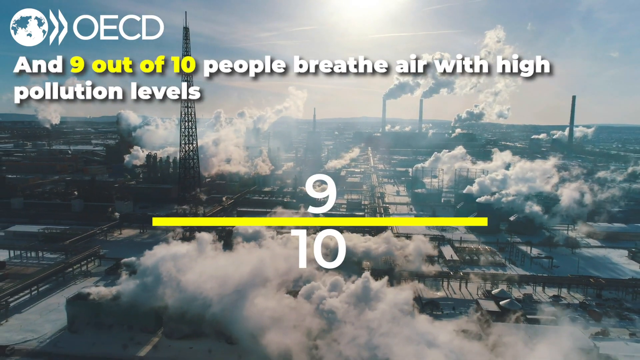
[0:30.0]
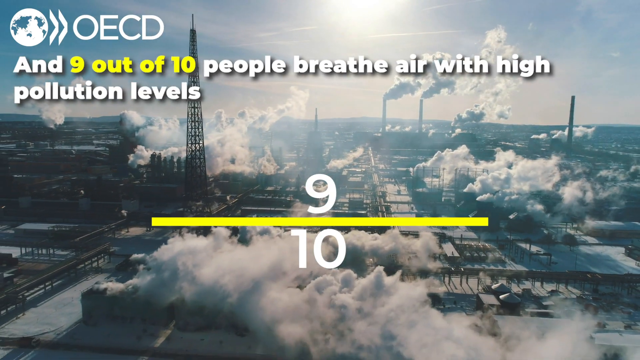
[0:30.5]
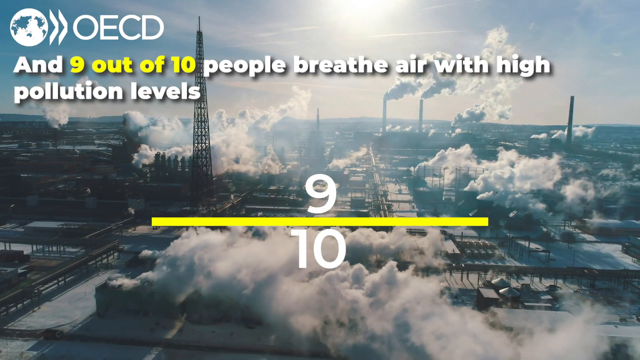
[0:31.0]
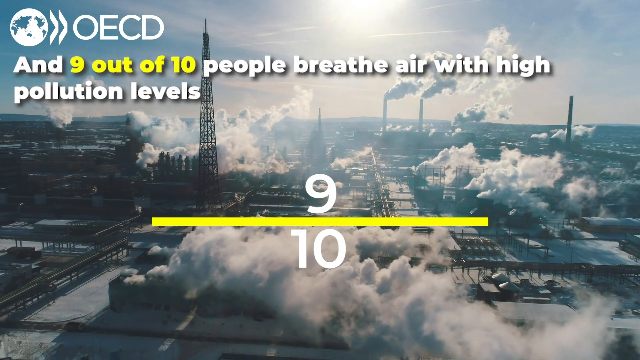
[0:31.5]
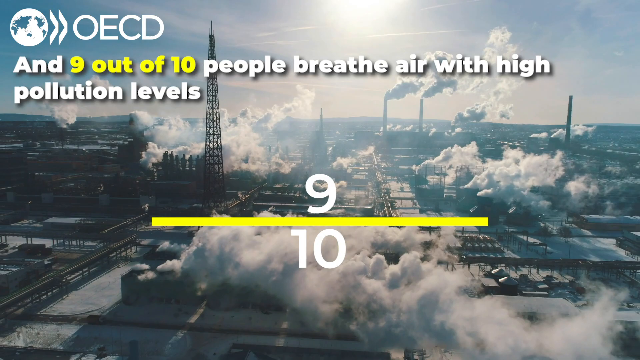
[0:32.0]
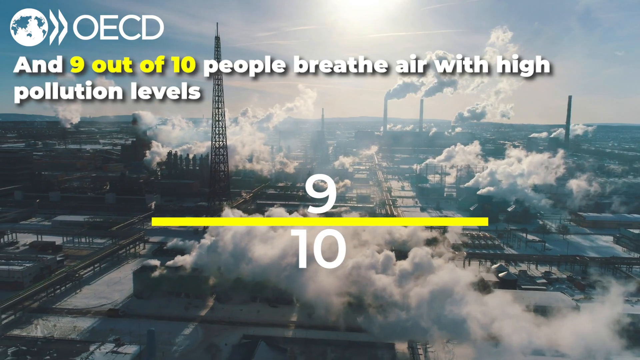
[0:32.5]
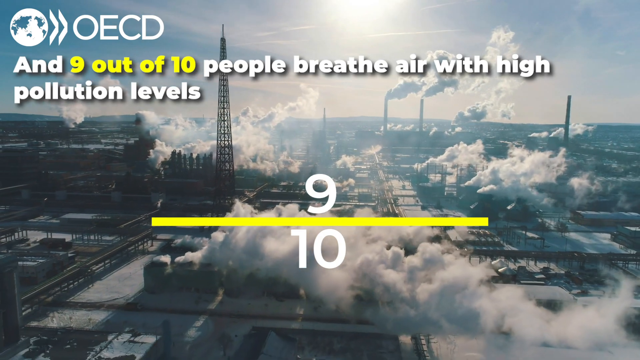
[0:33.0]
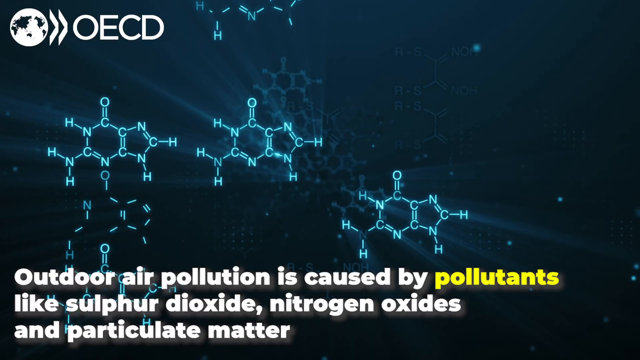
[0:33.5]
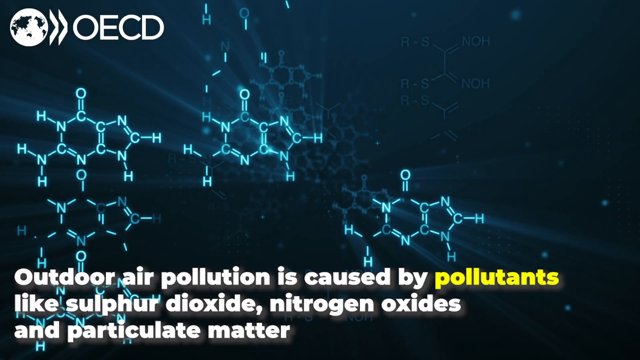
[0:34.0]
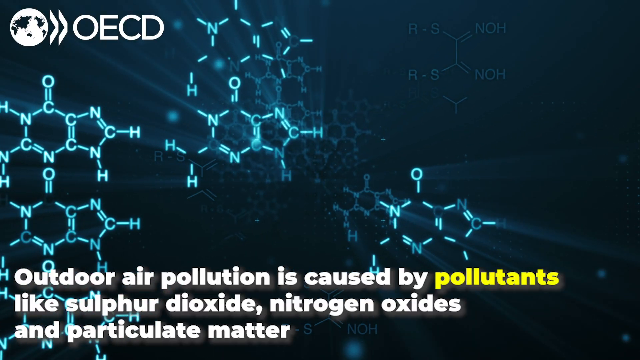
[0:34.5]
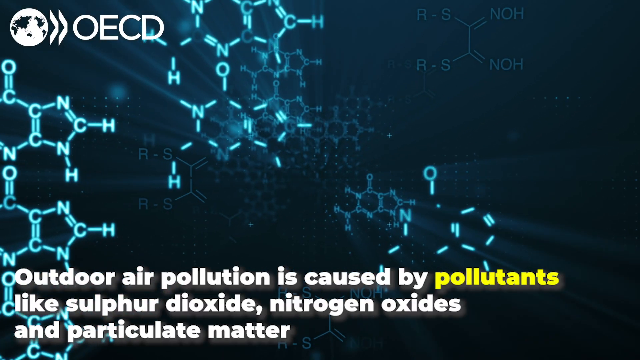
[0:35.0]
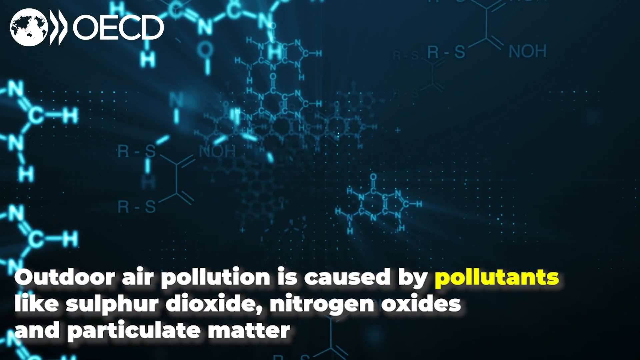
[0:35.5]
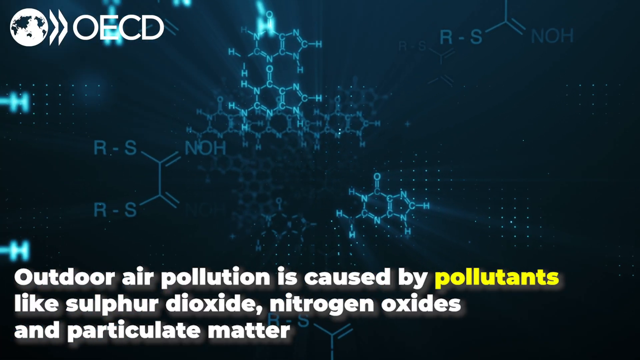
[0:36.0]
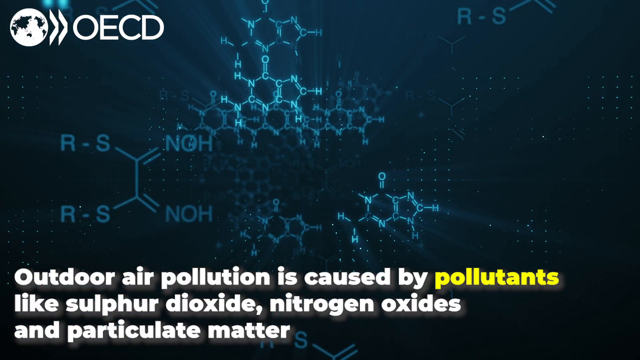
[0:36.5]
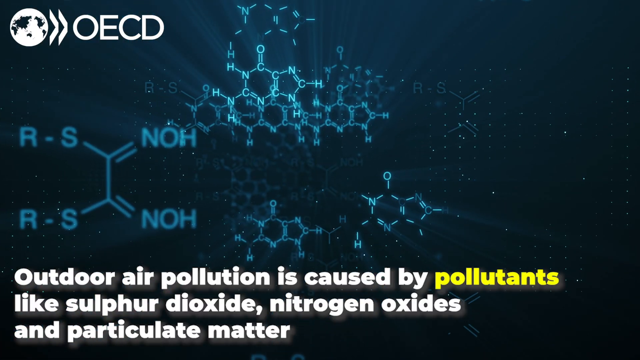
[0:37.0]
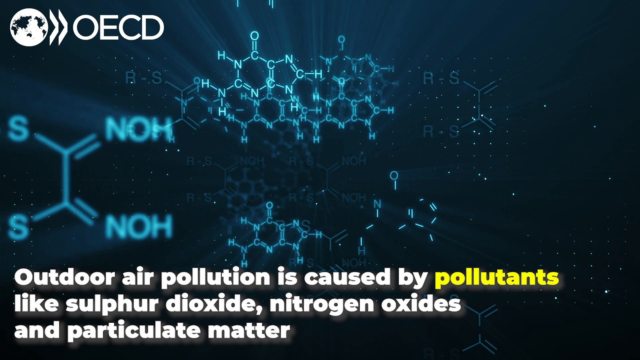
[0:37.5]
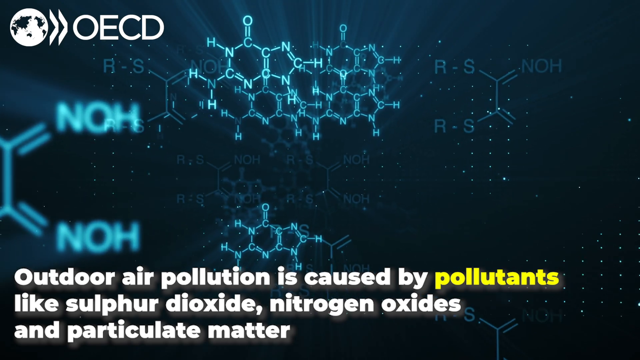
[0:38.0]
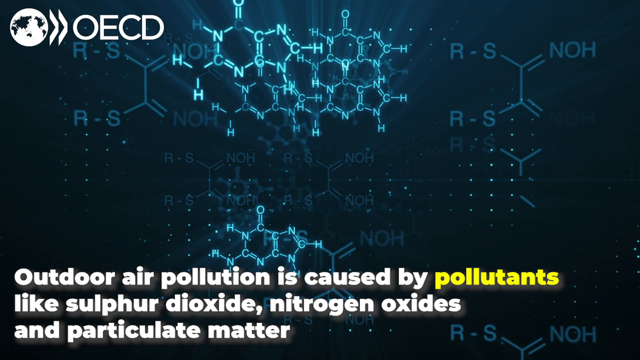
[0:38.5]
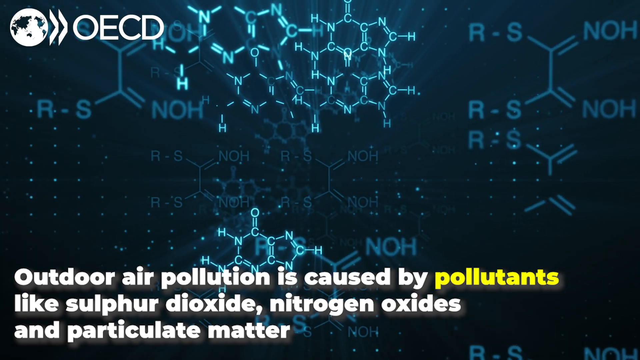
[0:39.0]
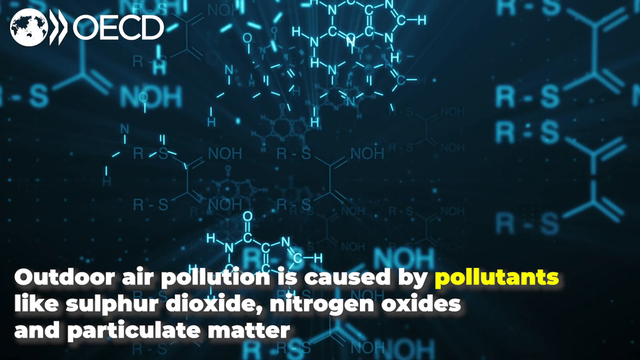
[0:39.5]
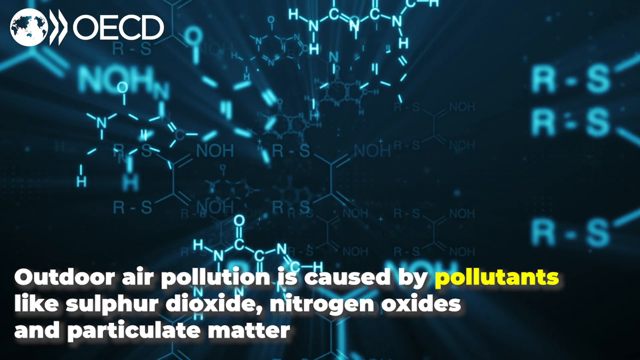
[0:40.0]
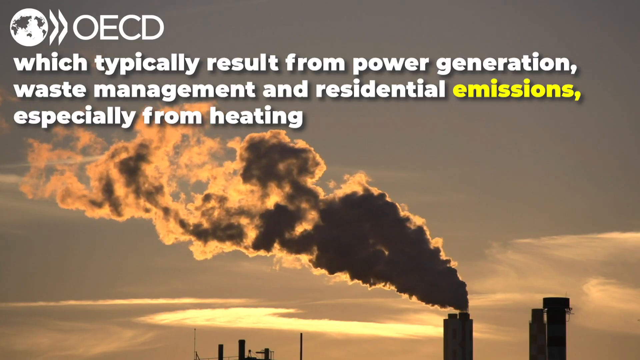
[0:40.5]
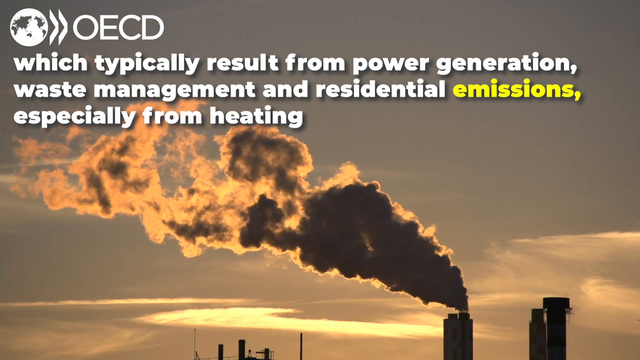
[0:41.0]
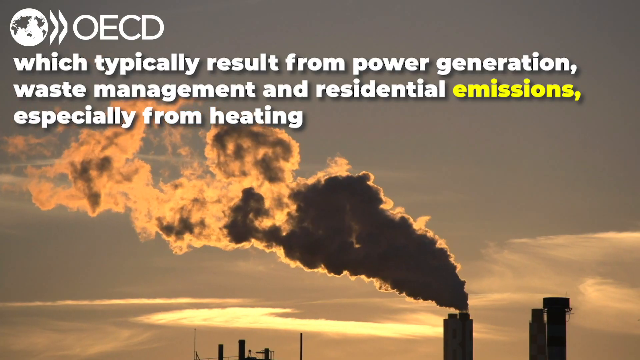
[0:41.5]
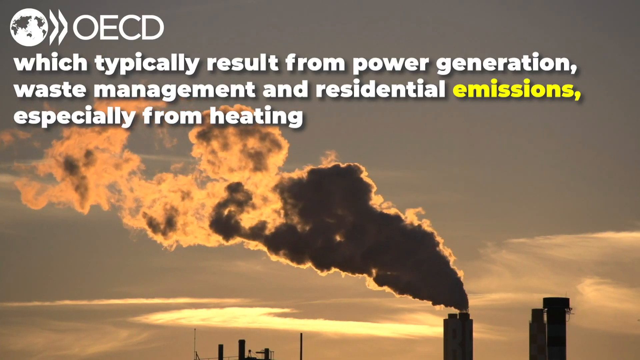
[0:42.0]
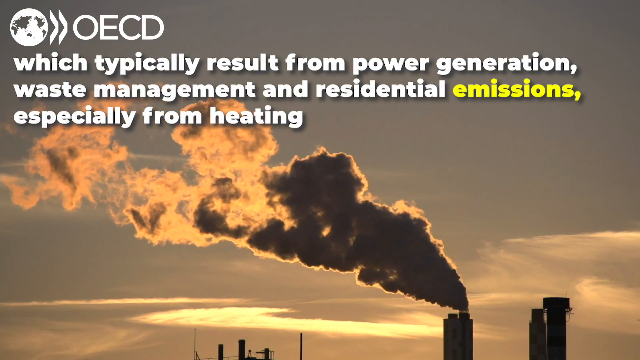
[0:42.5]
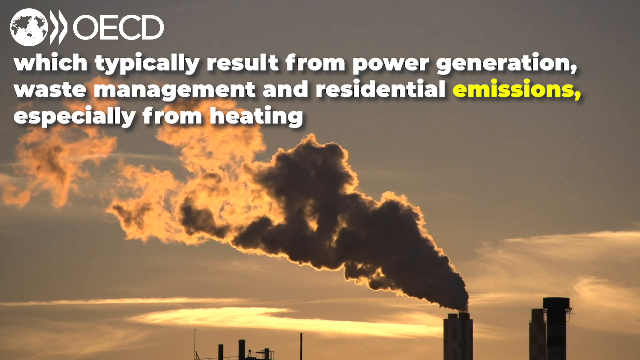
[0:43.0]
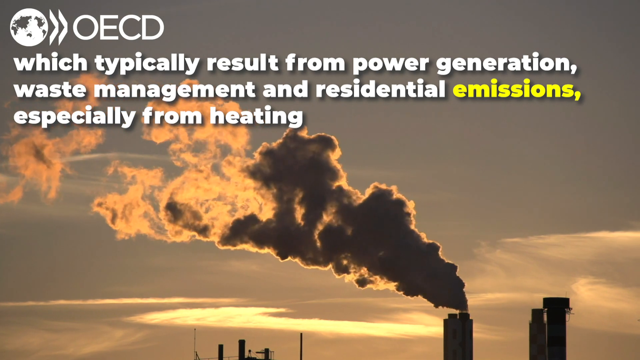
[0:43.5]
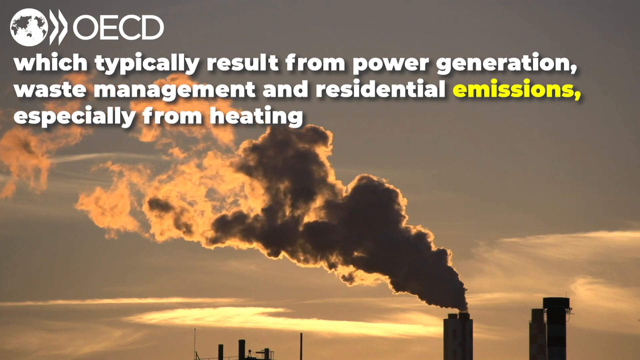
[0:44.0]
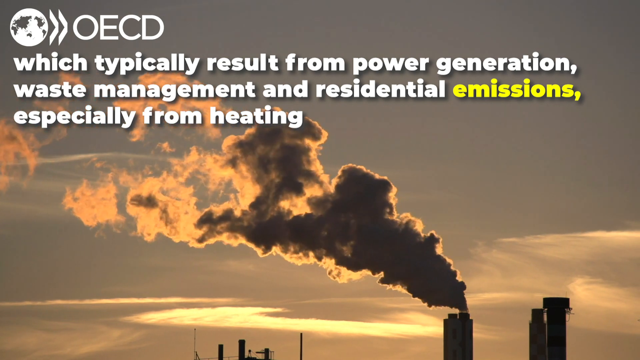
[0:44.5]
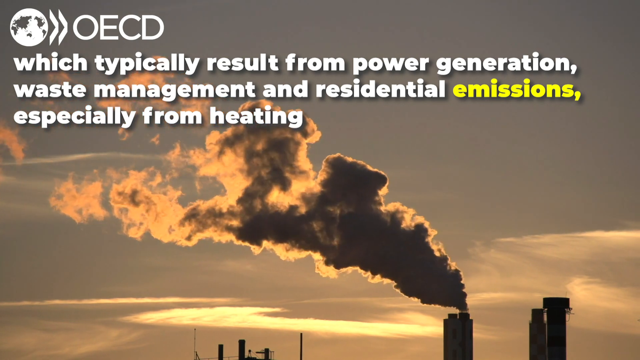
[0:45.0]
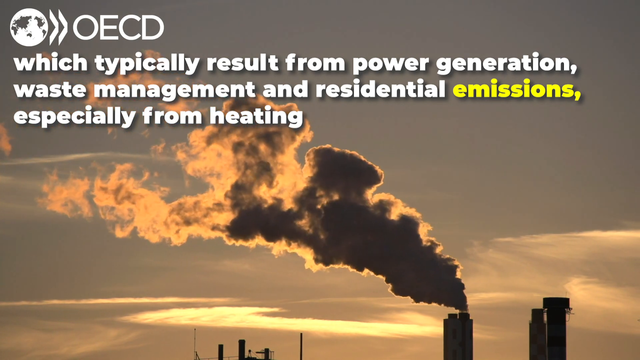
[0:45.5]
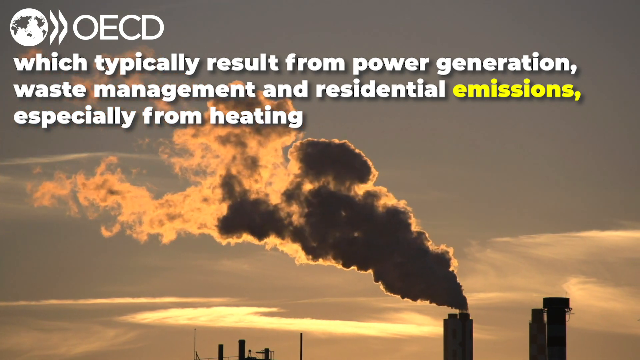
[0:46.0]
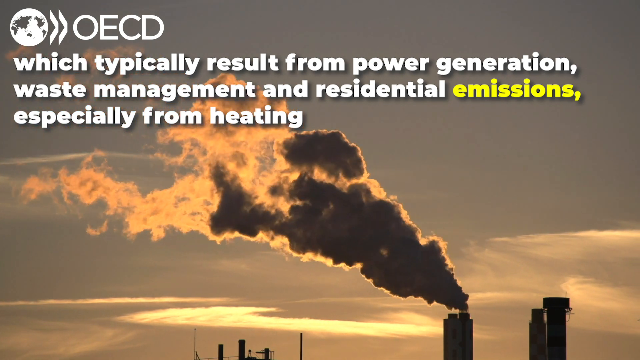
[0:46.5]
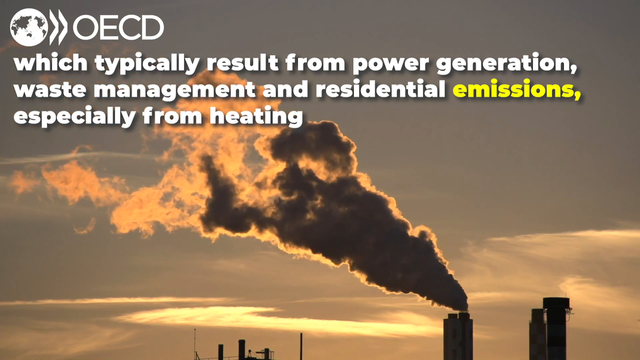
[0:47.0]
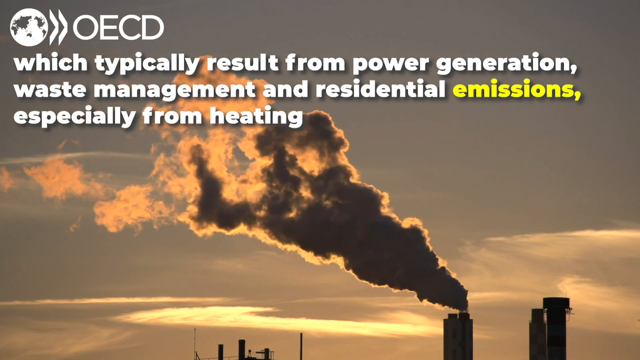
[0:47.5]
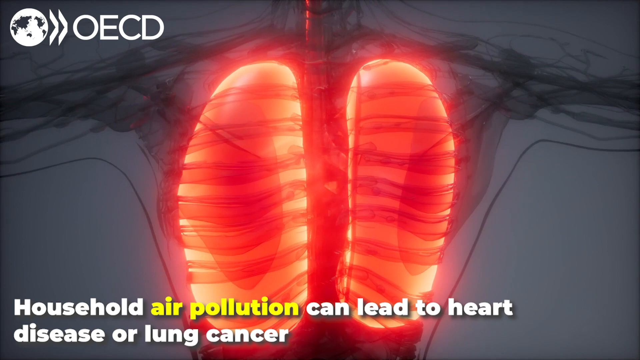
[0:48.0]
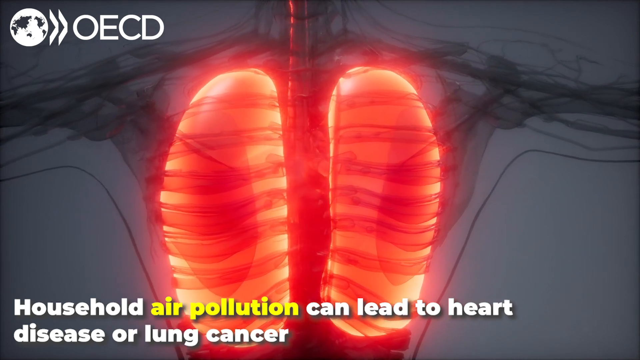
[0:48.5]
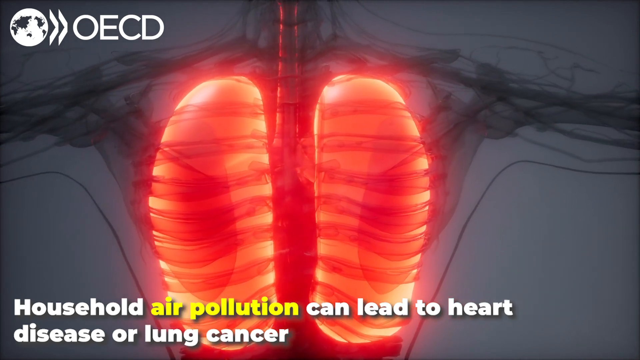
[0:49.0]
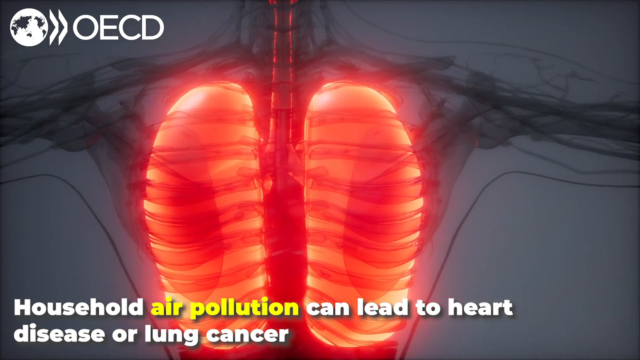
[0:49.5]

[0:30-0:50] The shot of the industrial estate with white smoke billowing out continues. Text at the top reads "and 9 out of 10 people breathe air with high pollution levels", with "9 out of 10" in yellow. In the centre of the screen are a big 9 and a 10 with a large yellow horizontal line drawn between them. The camera pans away from the industrial estate. Next, symbols appear on a screen: lots of C, N, H and O letters connected by single and double lines. Text at the bottom reads "outdoor air pollution is caused by pollutants like sulphur dioxide, nitrogen oxides and particle matter", with "pollutants" in yellow. The camera moves towards the neon blue symbols and figures, which are faded out in the background and become clearer and less blurry as they get closer. The next shot is at either sunset or sunrise, the sky greyish, with a close-up of the top of a factory; smoke comes out of the chimney towards the left of the screen as the wind blows it, dark in the middle and turning white as it billows further out. Text at the top reads "which typically result from power generation, waste management and residential emissions, especially from heating", with "emissions" in yellow. A graphic resembling the human body follows, with the lungs in a neon red and the rest of the skeleton, veins and other parts in a very opaque black. Text at the bottom reads "household air pollution can lead to heart disease or lung cancer".